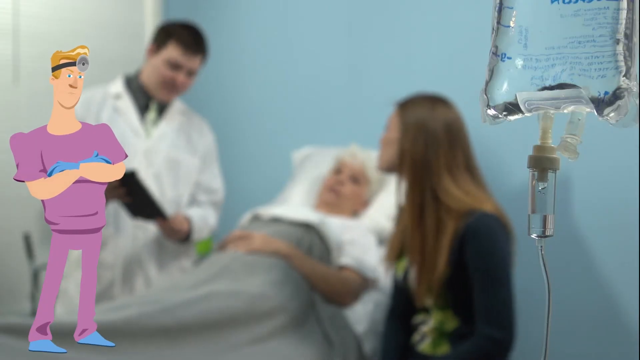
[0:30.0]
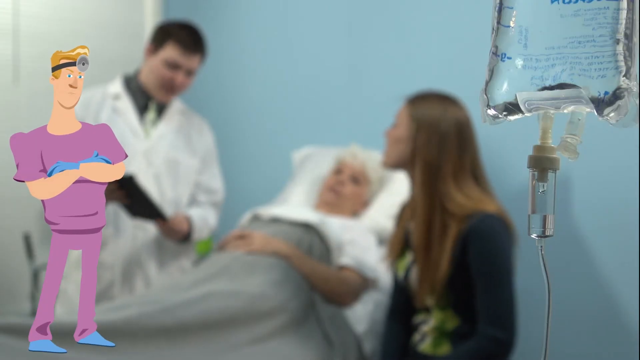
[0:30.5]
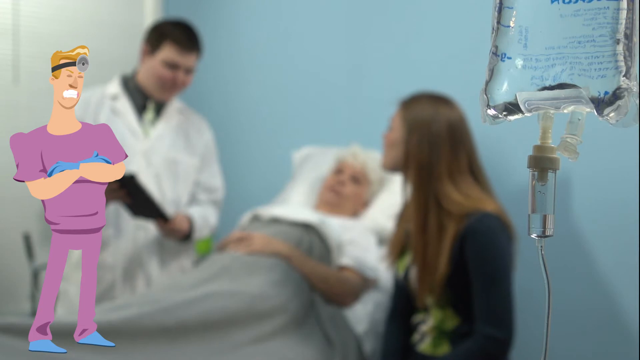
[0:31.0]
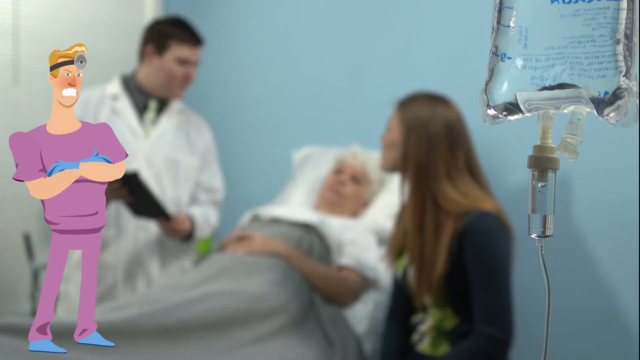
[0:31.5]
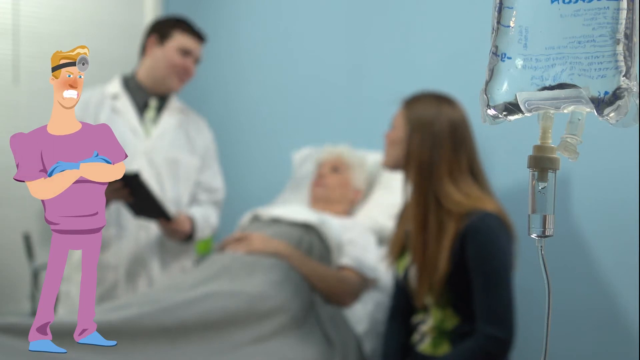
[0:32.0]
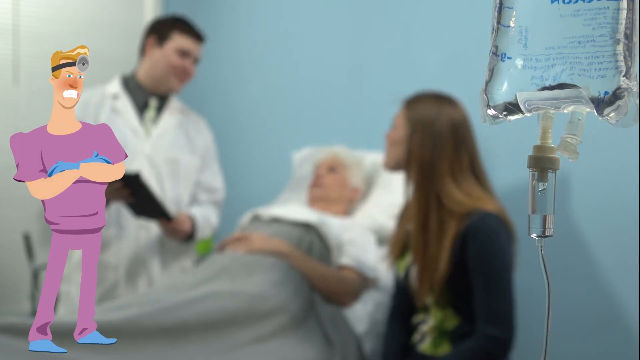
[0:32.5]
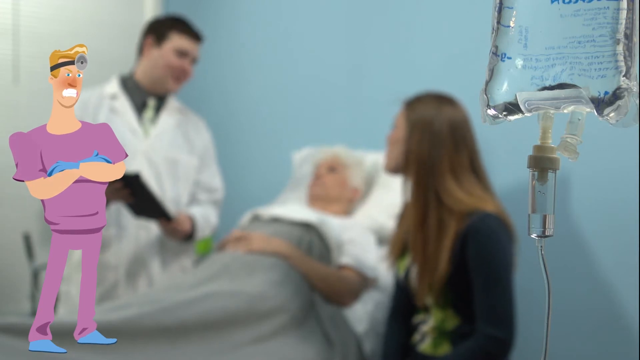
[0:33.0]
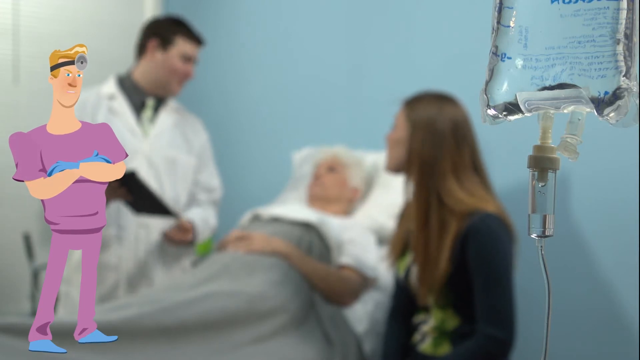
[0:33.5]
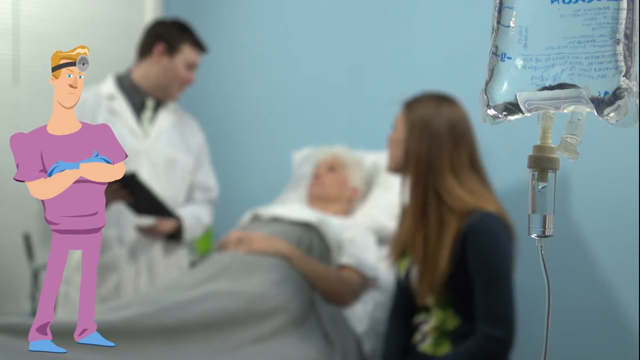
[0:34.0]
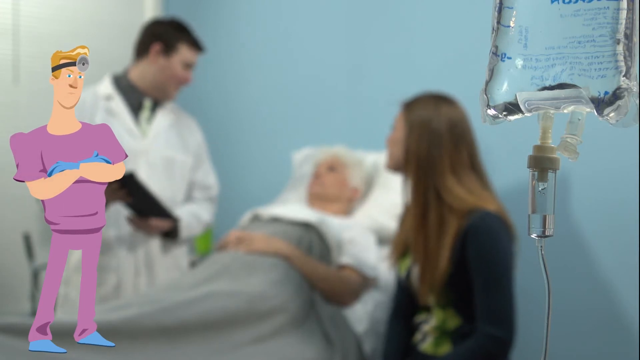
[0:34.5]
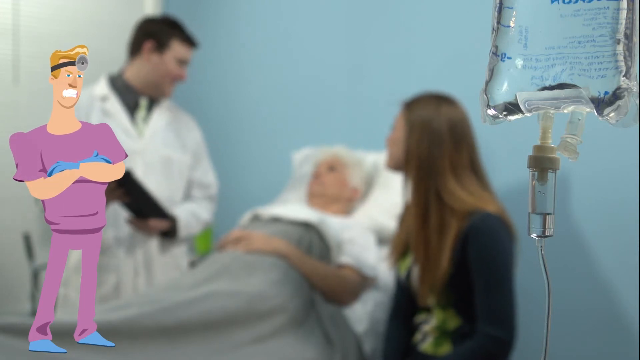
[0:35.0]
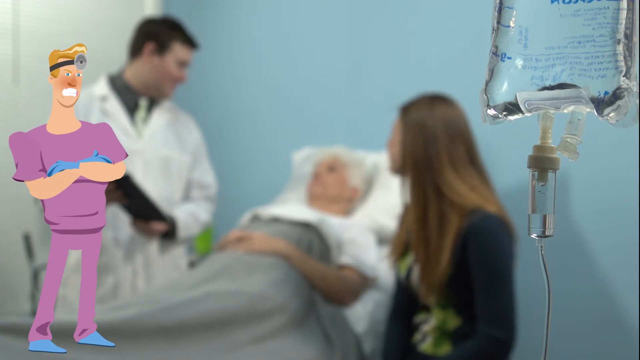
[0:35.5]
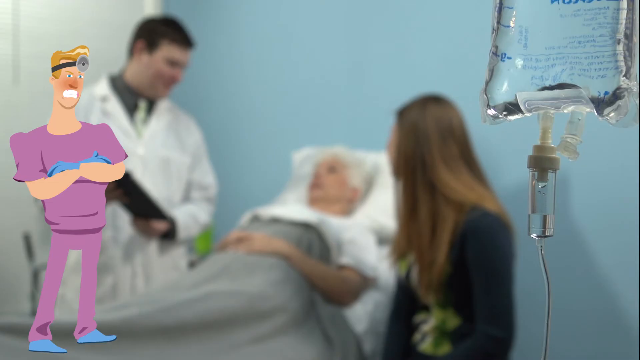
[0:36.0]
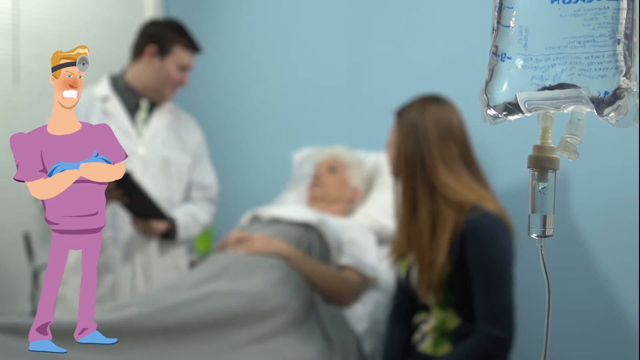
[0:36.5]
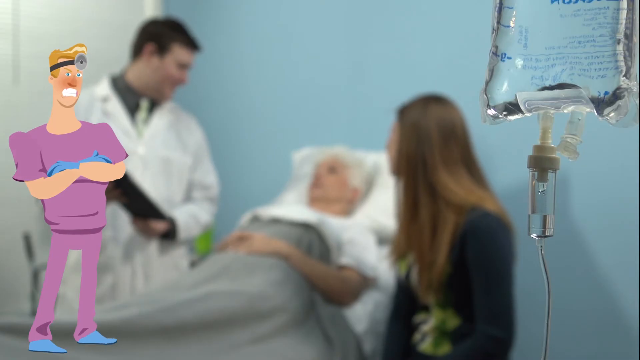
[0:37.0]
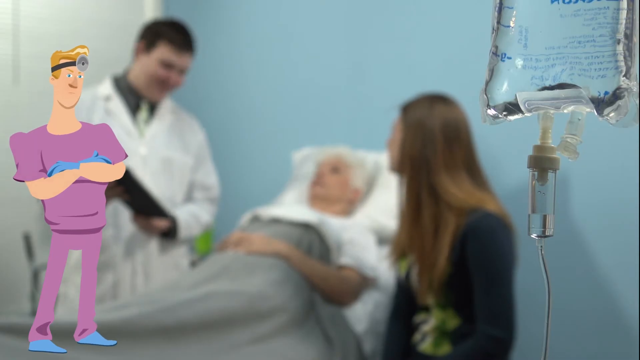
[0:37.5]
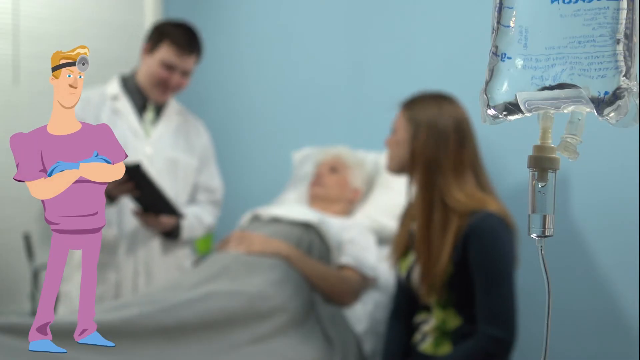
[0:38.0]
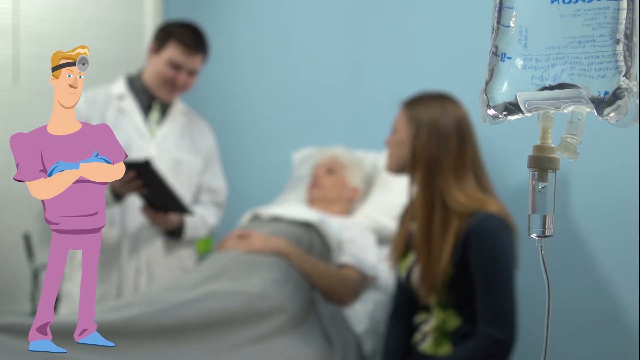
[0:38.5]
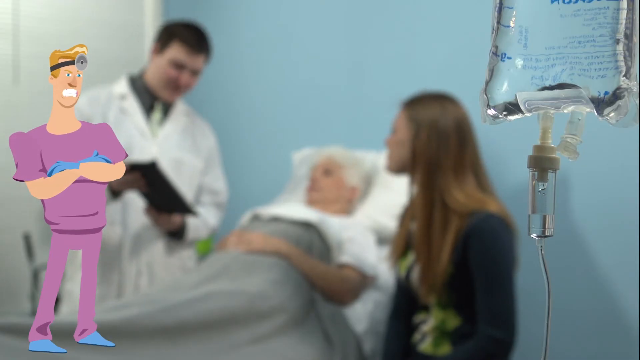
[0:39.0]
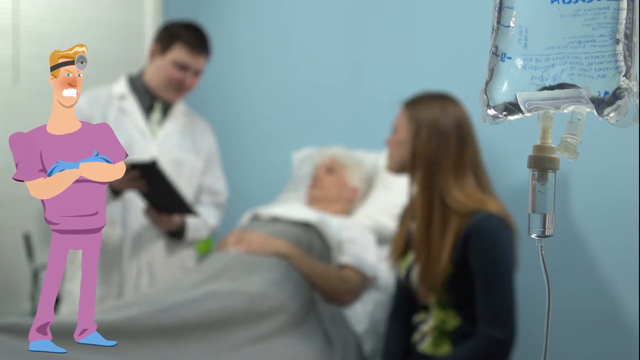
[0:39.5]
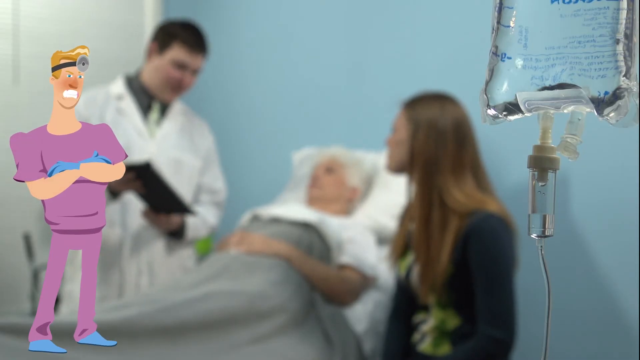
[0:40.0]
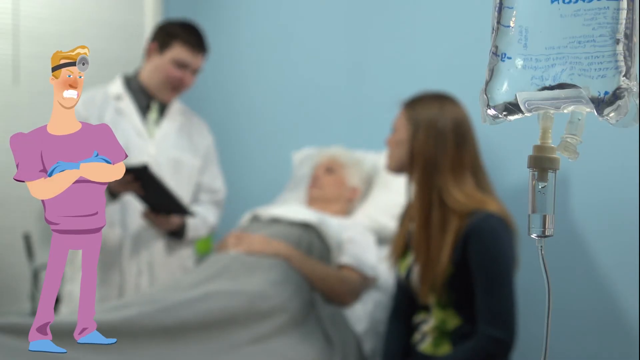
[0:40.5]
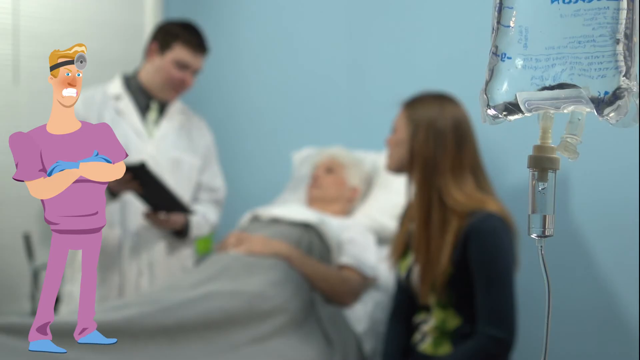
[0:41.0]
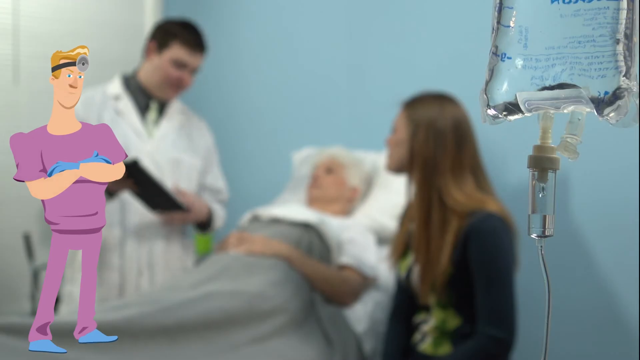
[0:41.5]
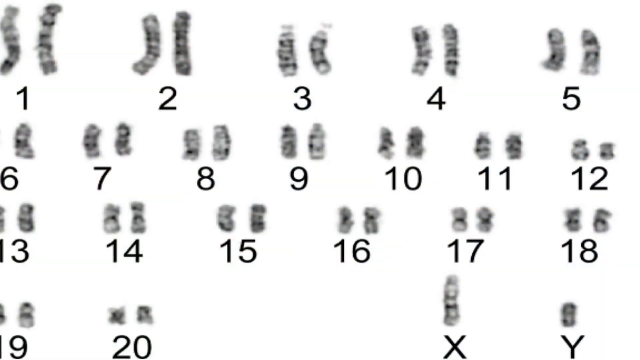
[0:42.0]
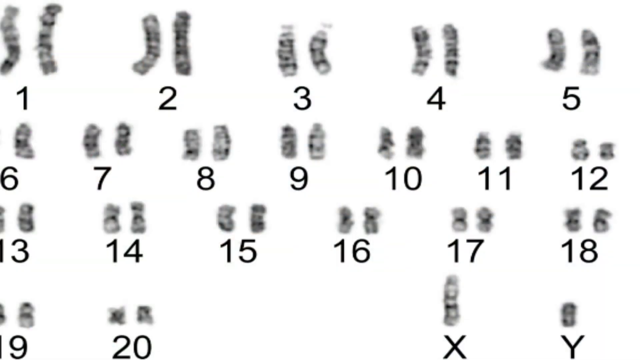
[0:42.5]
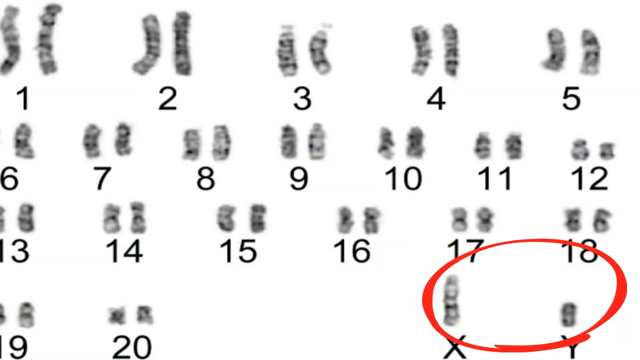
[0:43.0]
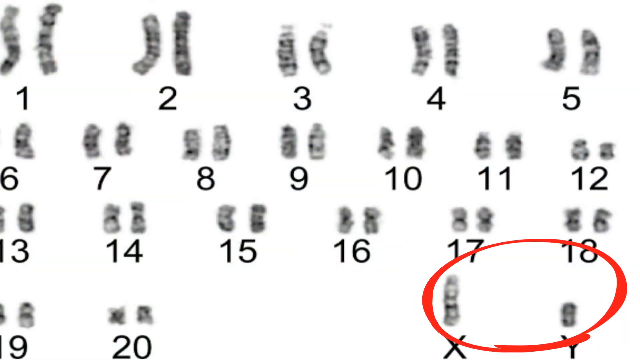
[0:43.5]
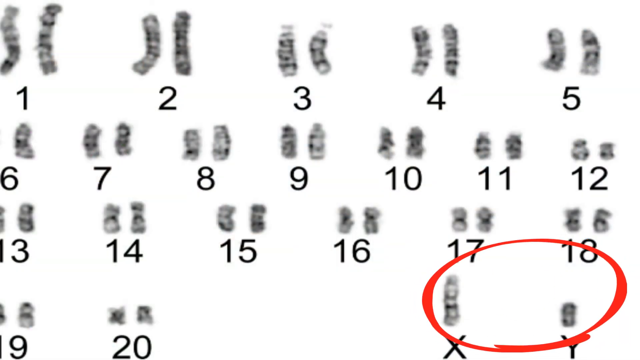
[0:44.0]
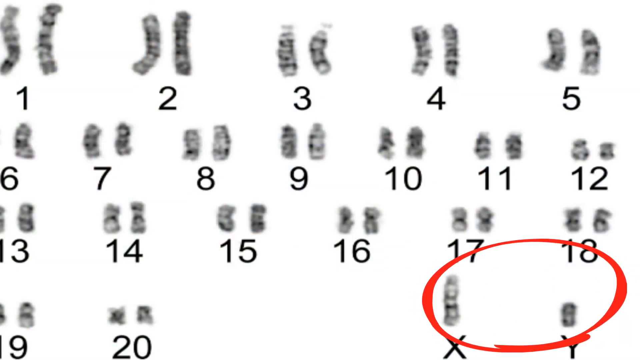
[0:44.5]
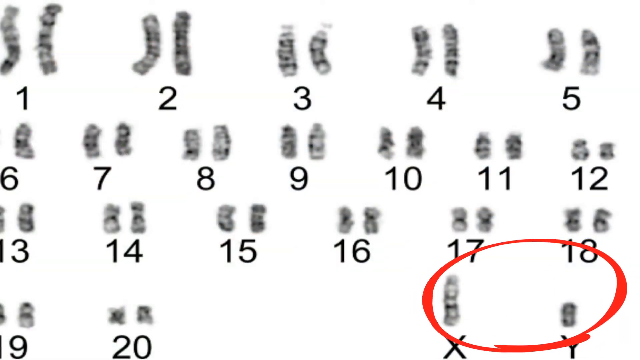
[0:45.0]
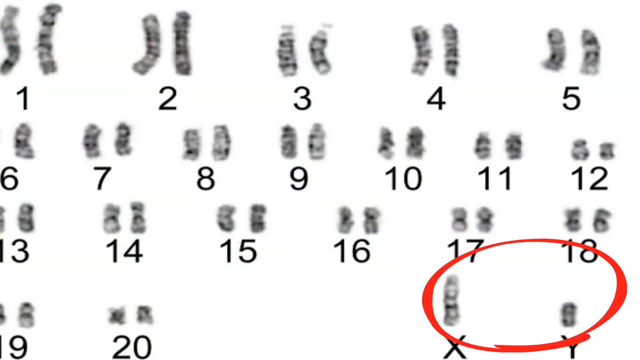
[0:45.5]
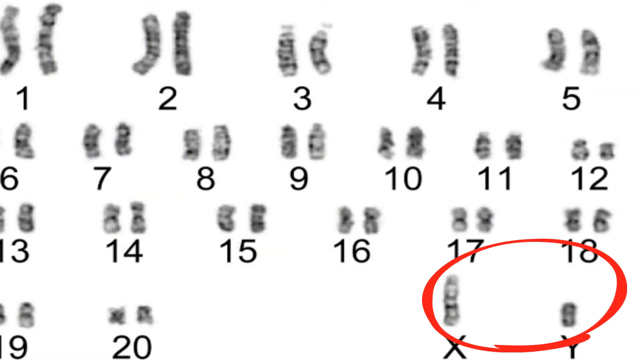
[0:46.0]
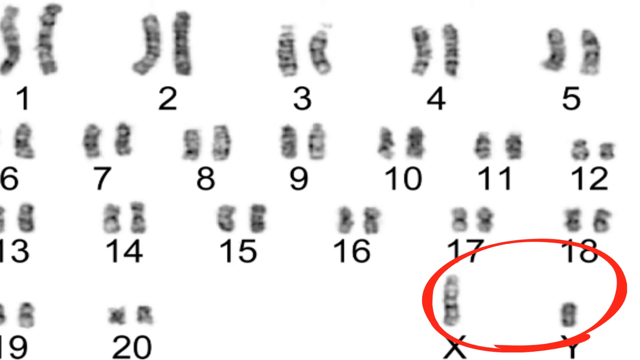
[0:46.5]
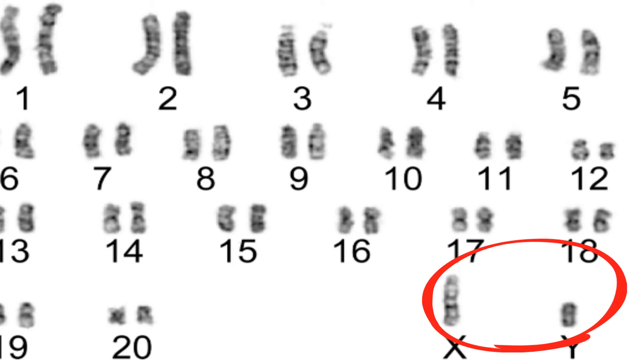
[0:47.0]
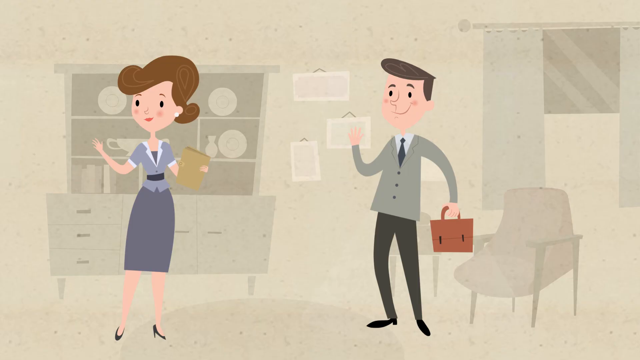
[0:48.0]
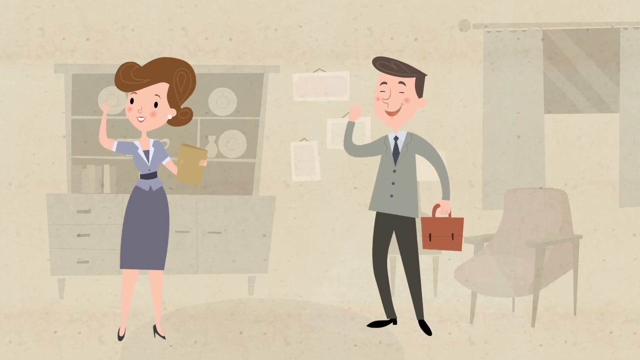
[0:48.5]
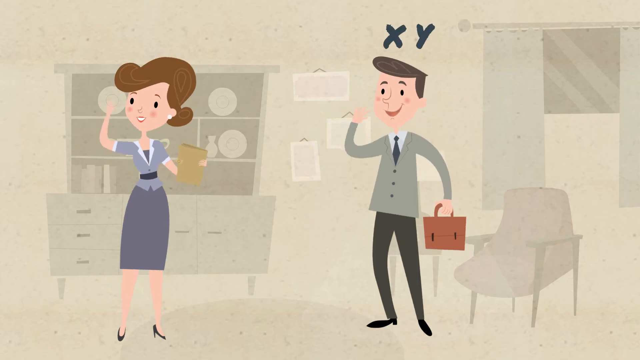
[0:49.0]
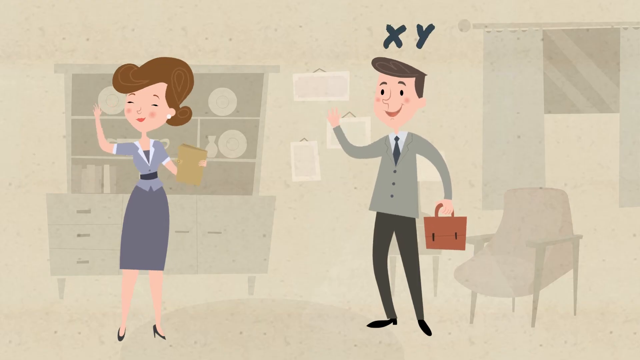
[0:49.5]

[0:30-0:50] In a real-life video, a woman with white hair lies in a bed in a semi-upright position. A younger woman, seen in left-side profile with long brown hair over a dark top, faces a male on the left. To the right is a large bag with blue numbers on it that comes to a square at the bottom, with two elongated items coming down from it. To the left of these is another elongated cylinder with clear liquid at the bottom and a drop coming toward the middle of the cylinder. A line goes down off the screen. The male on the left, about three inches from the left edge of the screen, wears a white jacket, a white tie at his neck, and a darker shirt with a darker collar. His head is toward his left, and his left hand holds the bottom of a black object.